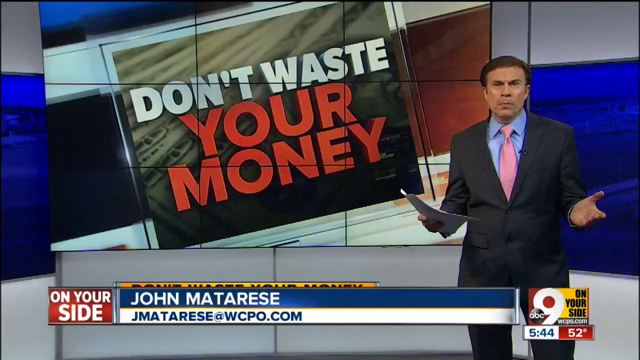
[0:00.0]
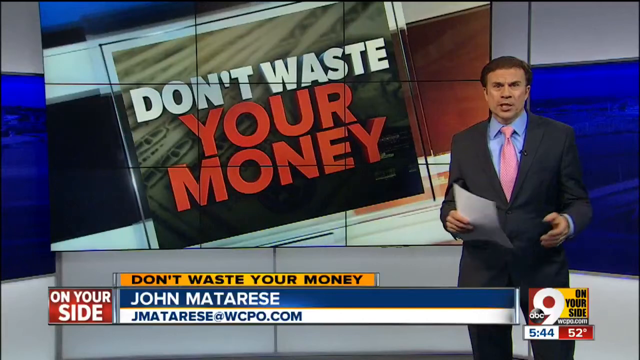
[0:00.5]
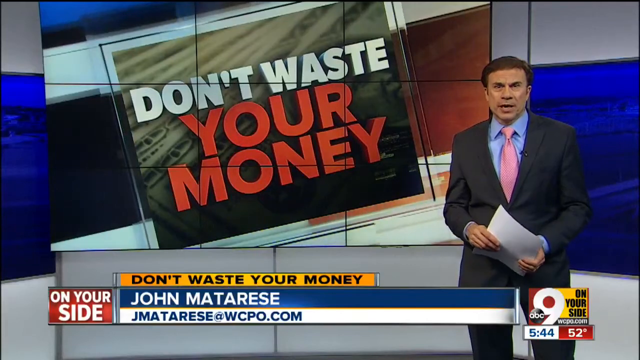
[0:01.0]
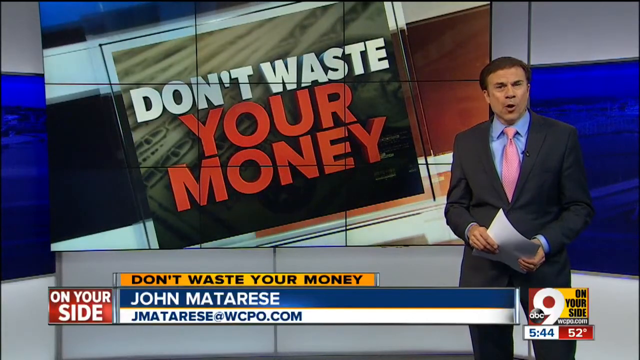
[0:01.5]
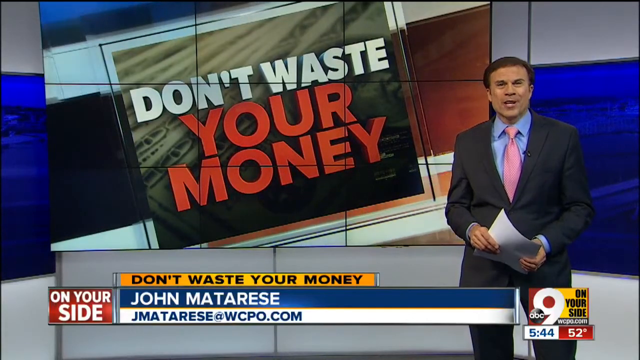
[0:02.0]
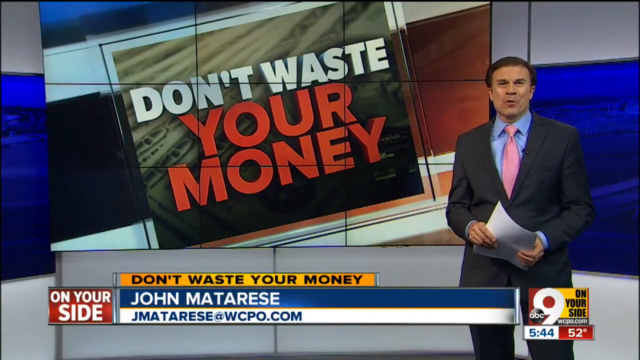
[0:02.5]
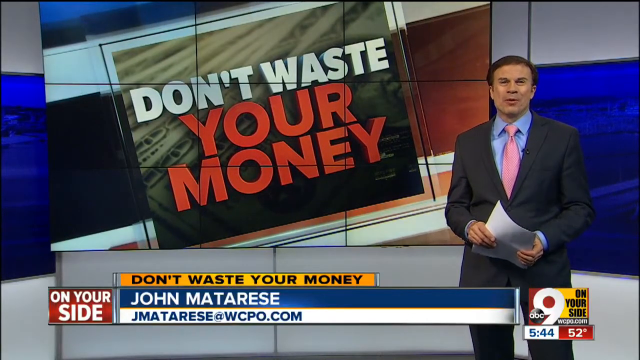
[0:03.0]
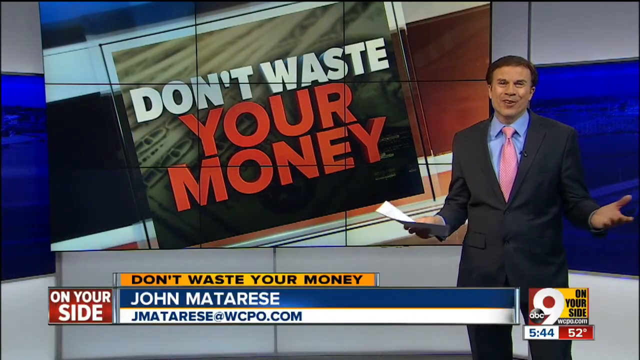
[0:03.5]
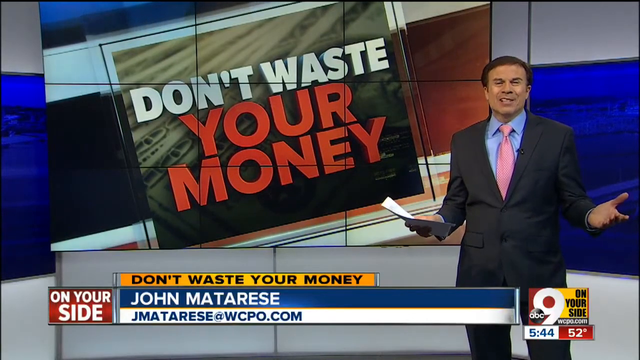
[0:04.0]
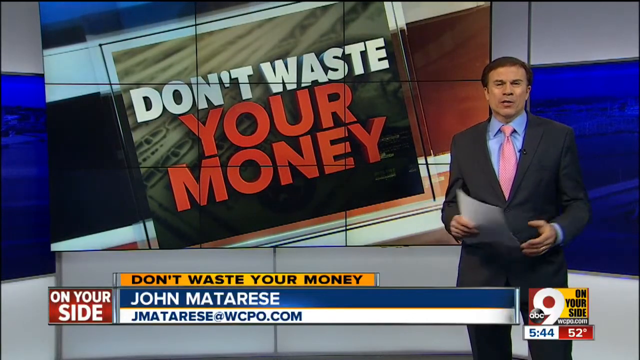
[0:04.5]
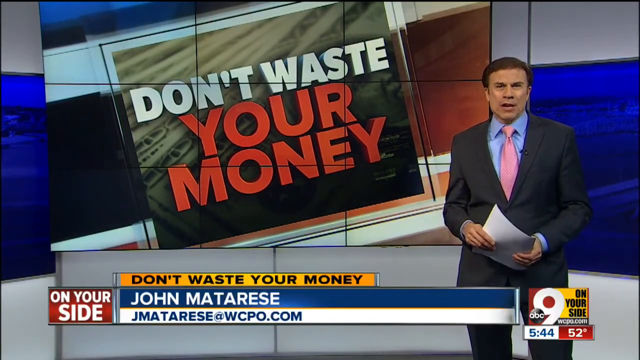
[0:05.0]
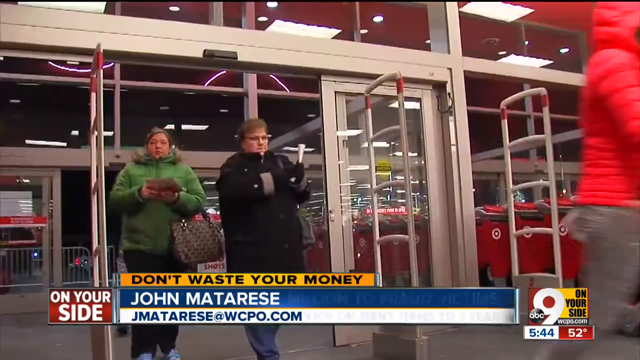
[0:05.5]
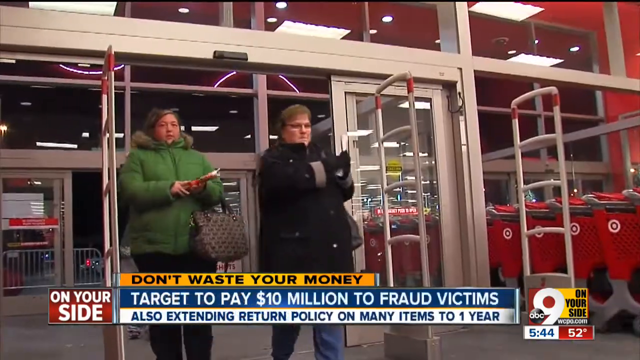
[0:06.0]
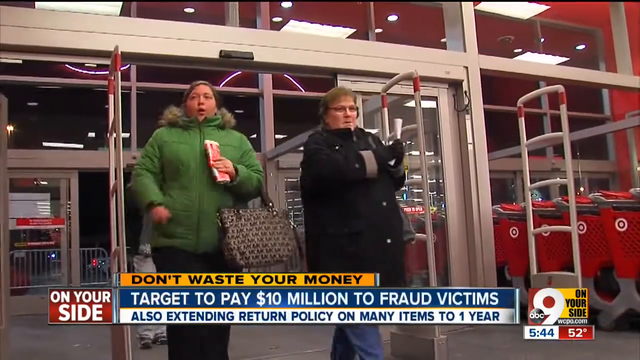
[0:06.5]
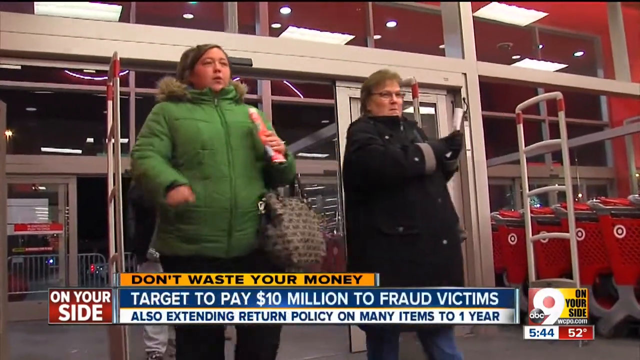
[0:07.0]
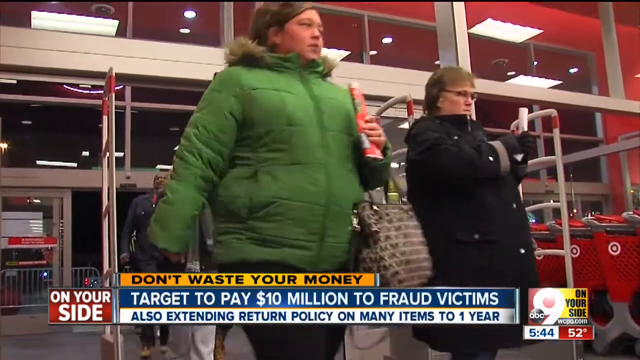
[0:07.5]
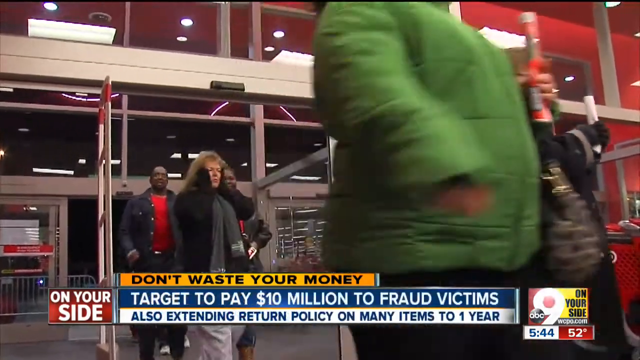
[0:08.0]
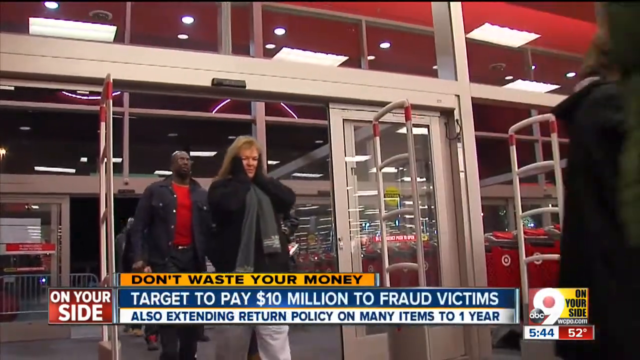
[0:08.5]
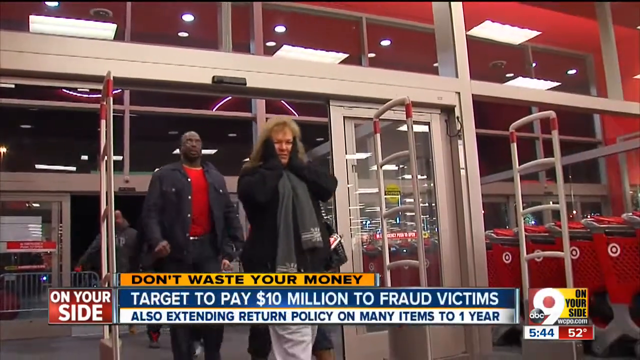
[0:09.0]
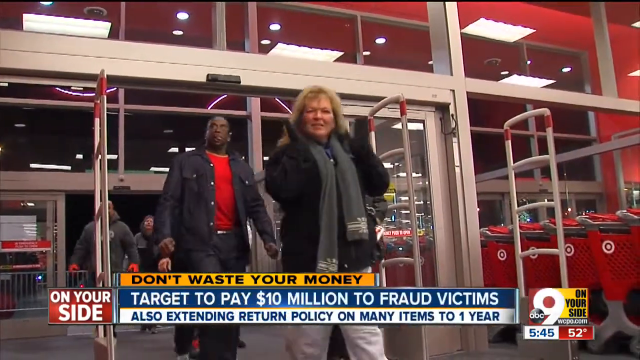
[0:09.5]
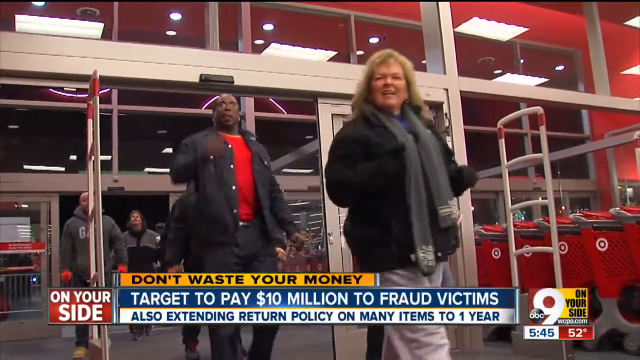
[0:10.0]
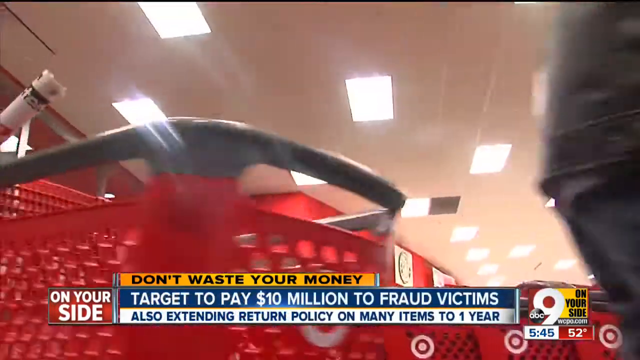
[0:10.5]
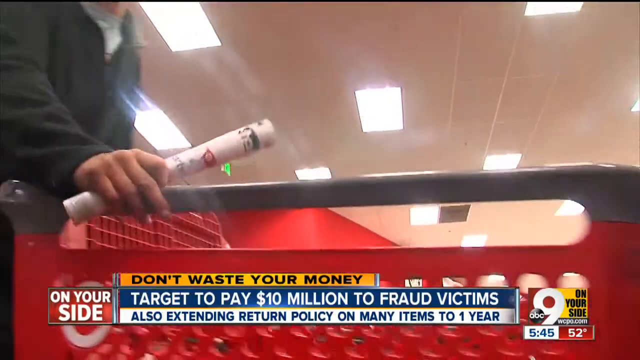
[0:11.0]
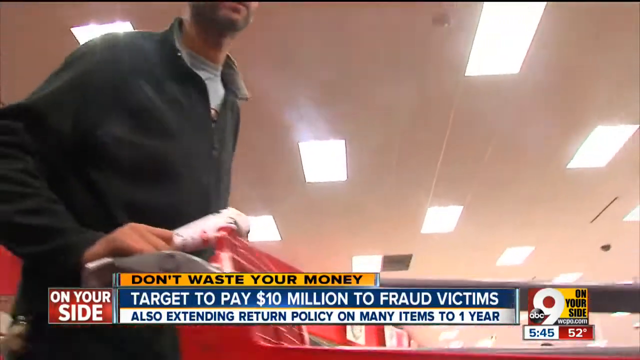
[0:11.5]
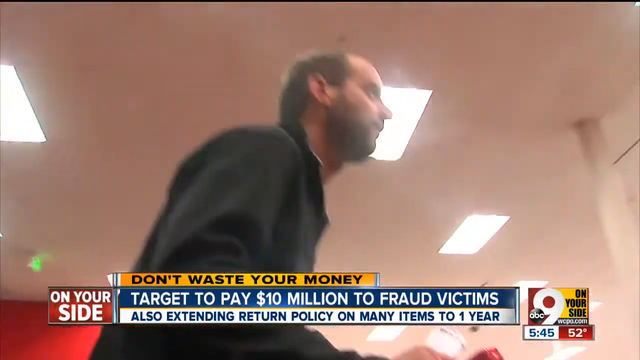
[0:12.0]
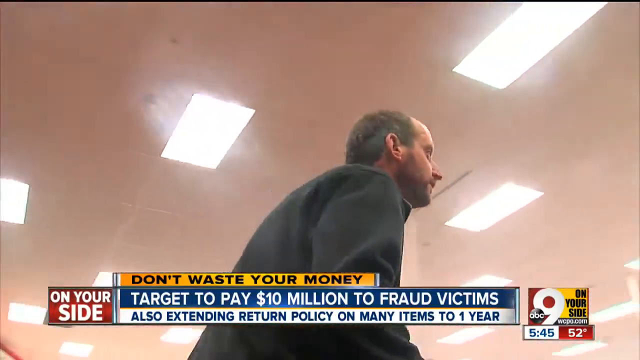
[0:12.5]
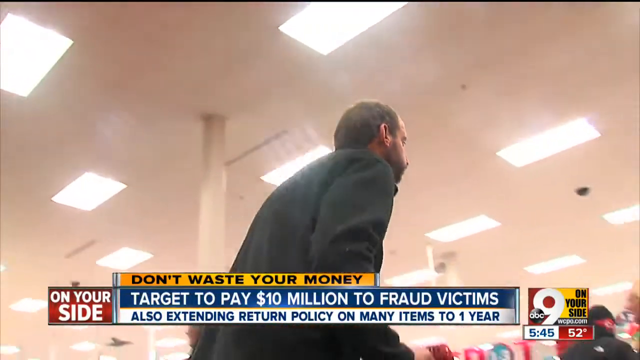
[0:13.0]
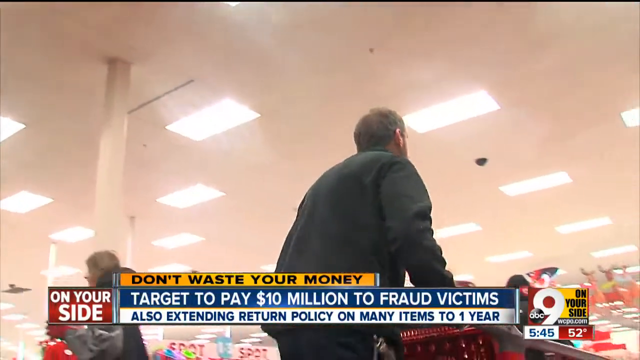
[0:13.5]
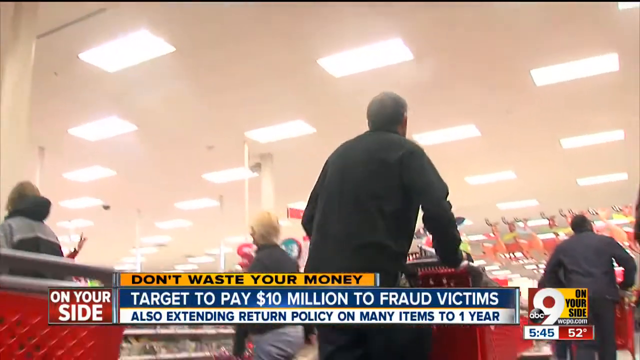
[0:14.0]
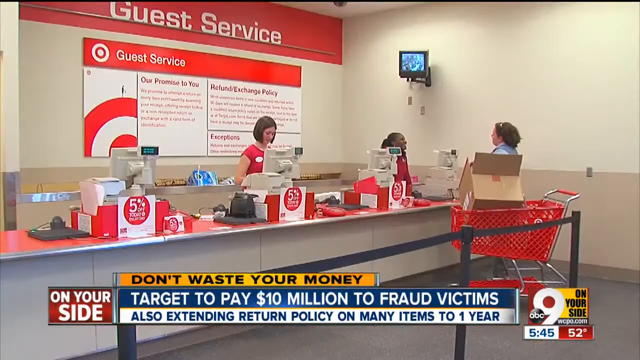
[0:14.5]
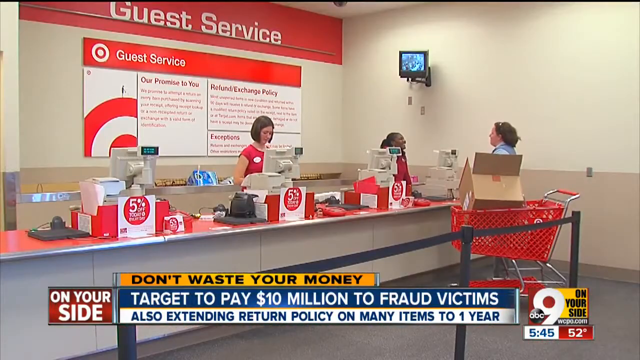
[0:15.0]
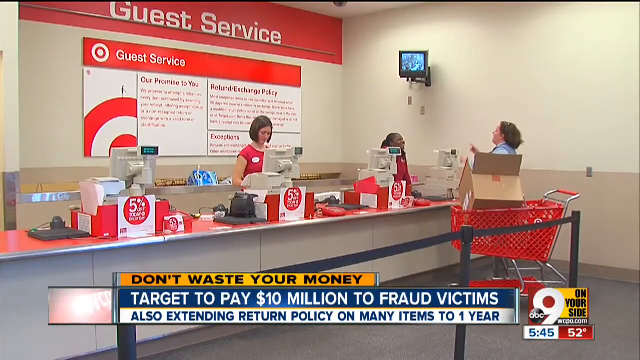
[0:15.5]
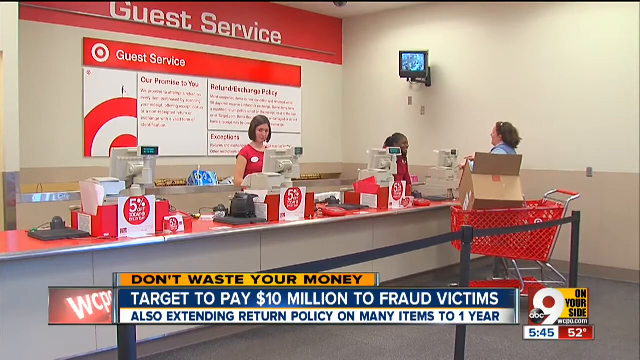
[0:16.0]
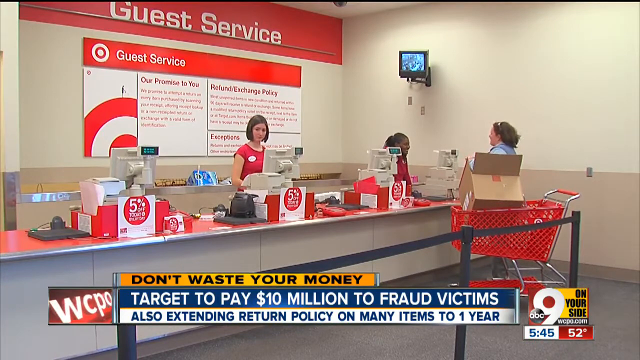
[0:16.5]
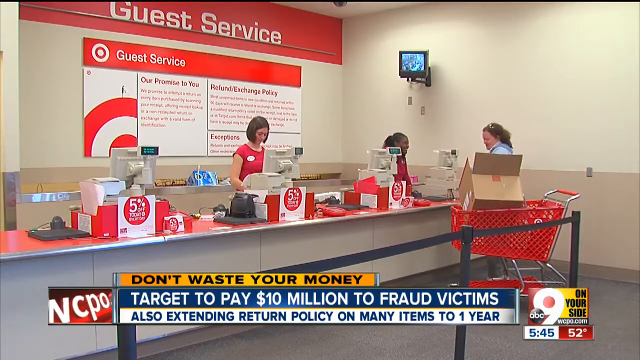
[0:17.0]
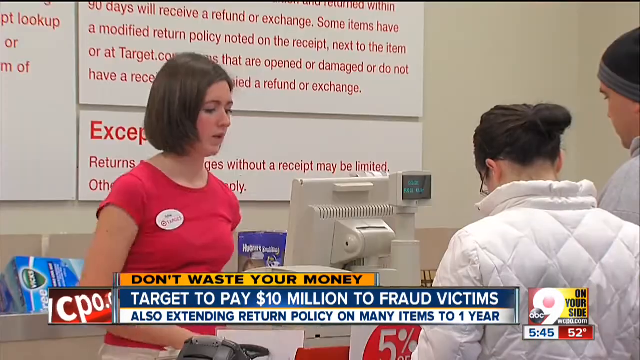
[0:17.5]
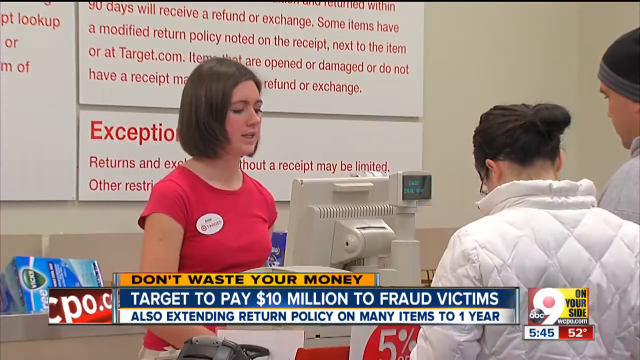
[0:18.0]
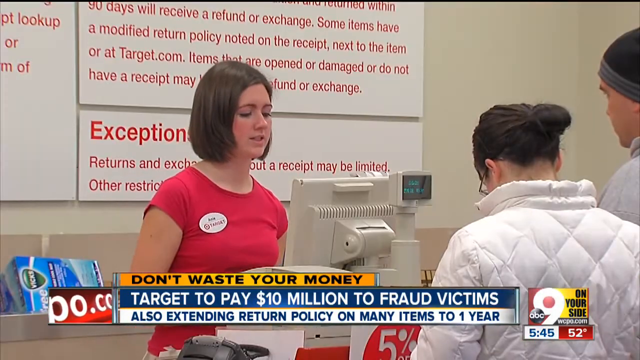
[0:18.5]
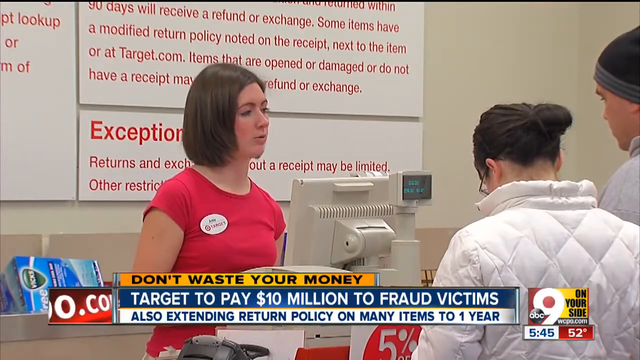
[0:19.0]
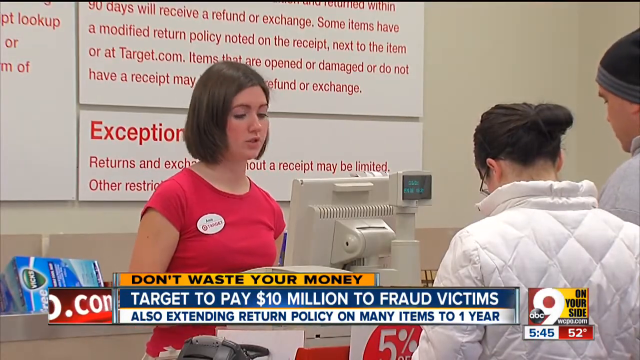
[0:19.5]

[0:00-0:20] A news segment shows a reporter on the right side of the screen. The channel is ABC News, channel number 9. The story being reported appears on the left side and reads "Don't Waste Your Money." The man is named John Matarese, with his name shown in the headline at the bottom, along with the segment title "Don't Waste Your Money." The scene changes to two women shoppers at a Target store, with other people behind them; the people are walking into the Target store. Text at the bottom reads "Target to pay $10 million to fraud victims. Also extending return policy on many items to one year." Next, a looking-up view from below the ground shows a man pushing a red Target shopping cart. The guest service area of the Target, where people go to return items, appears, with a Target employee helping a customer; there are two Target employees and one customer, who is on the right side. A close-up then shows one of the Target employees helping a customer who is trying to return products.